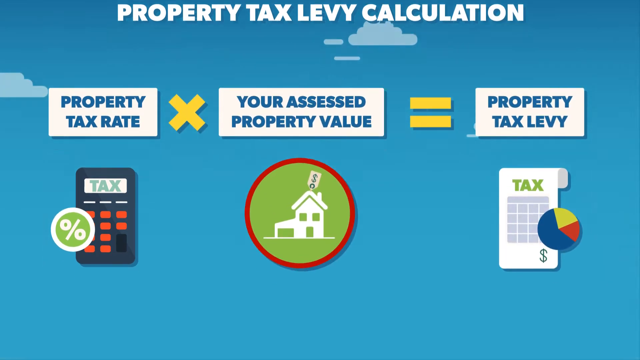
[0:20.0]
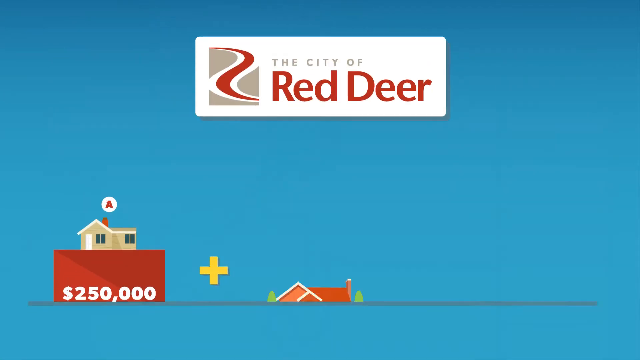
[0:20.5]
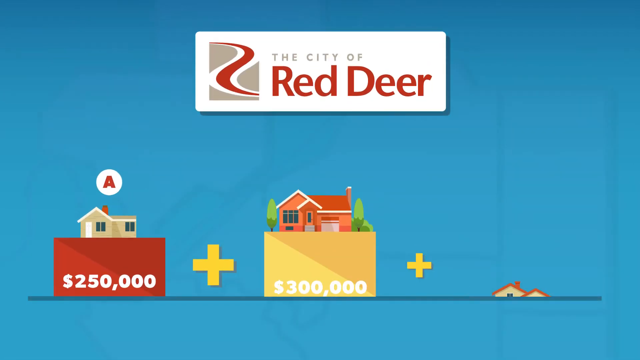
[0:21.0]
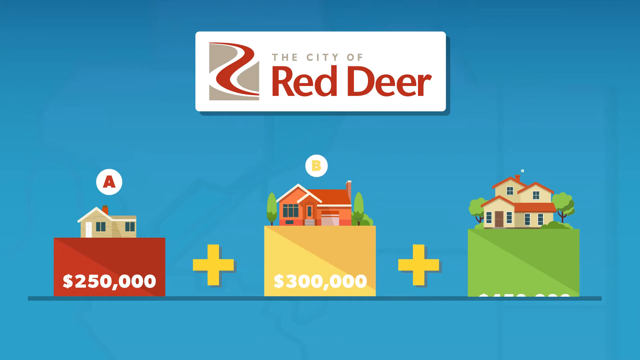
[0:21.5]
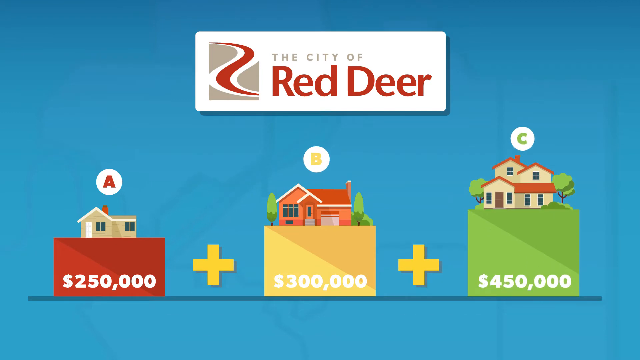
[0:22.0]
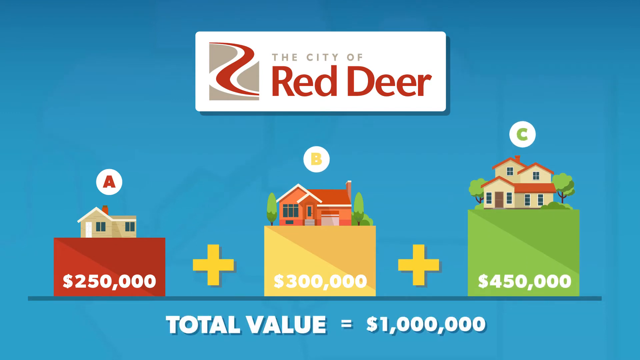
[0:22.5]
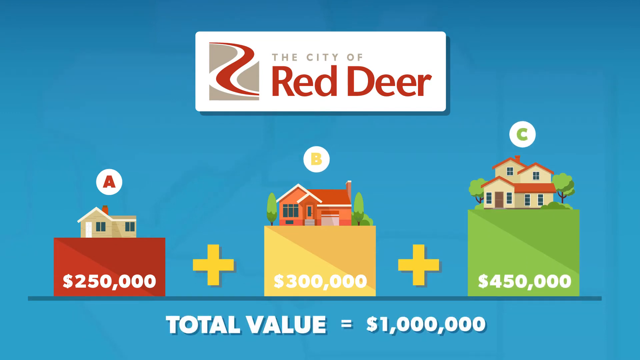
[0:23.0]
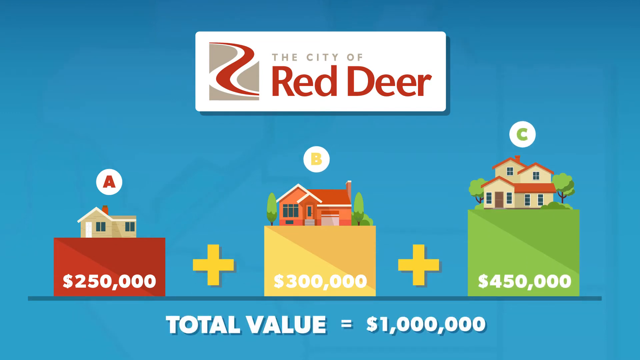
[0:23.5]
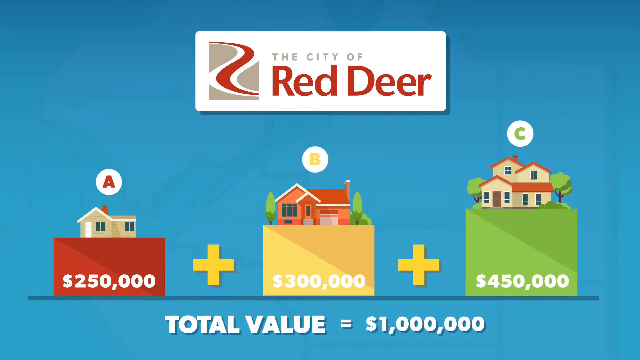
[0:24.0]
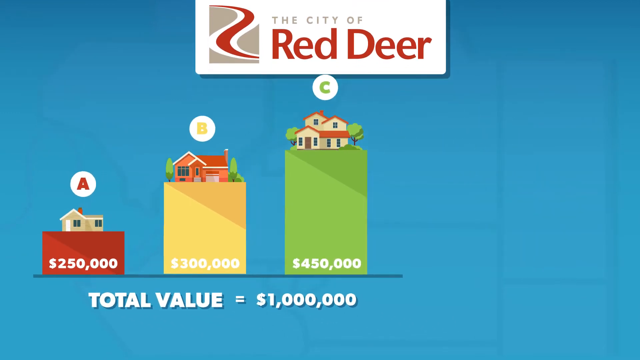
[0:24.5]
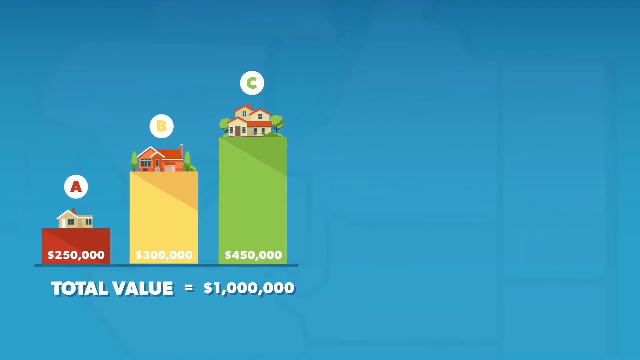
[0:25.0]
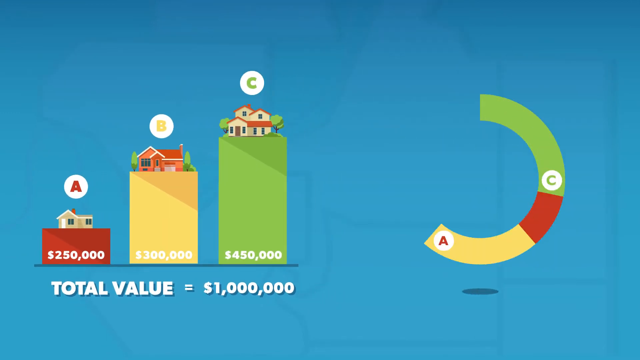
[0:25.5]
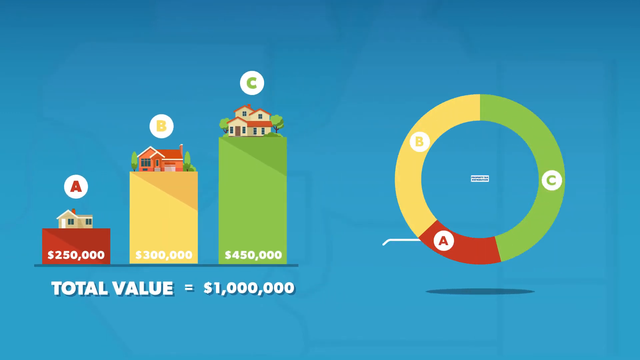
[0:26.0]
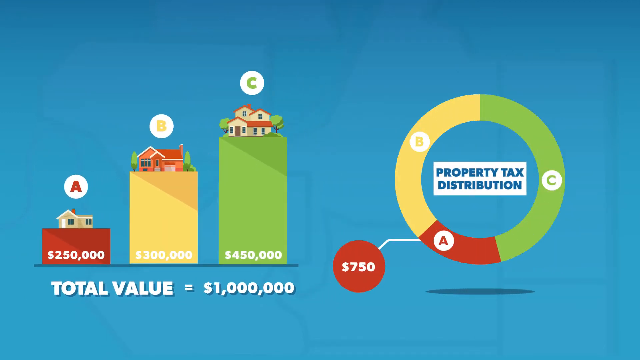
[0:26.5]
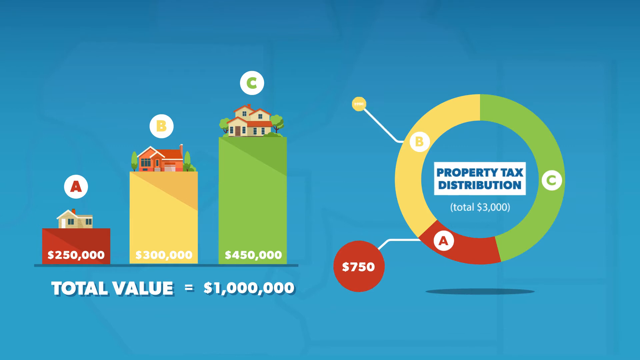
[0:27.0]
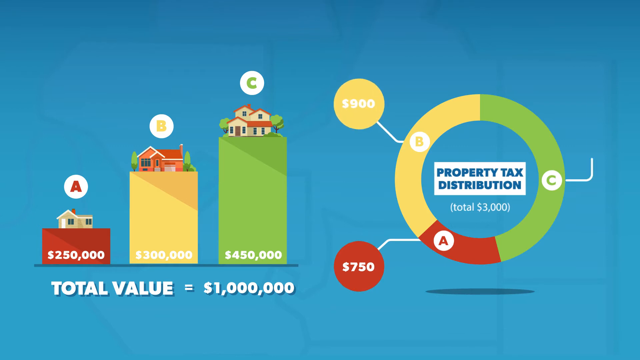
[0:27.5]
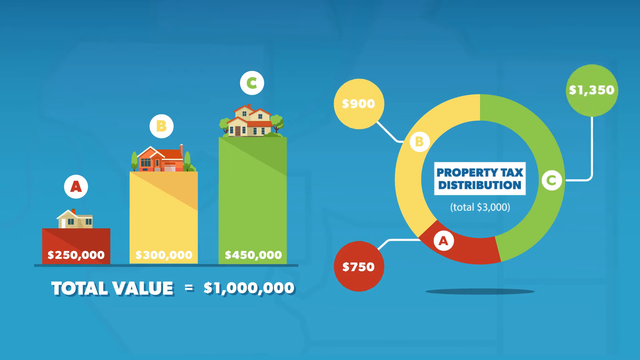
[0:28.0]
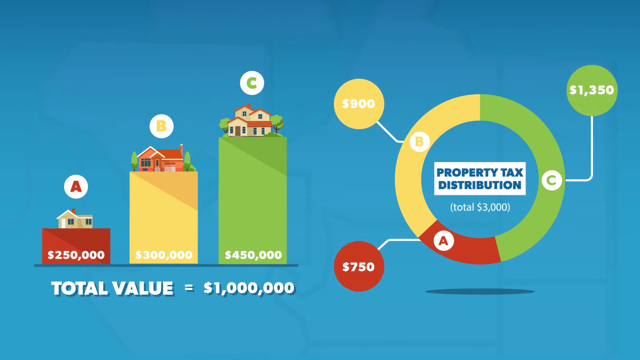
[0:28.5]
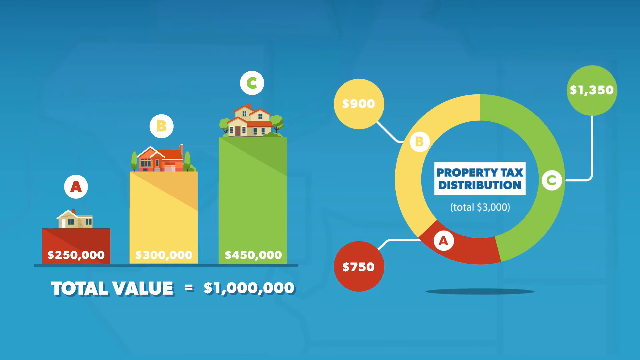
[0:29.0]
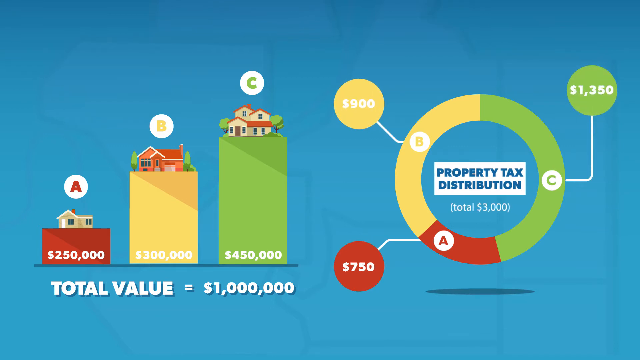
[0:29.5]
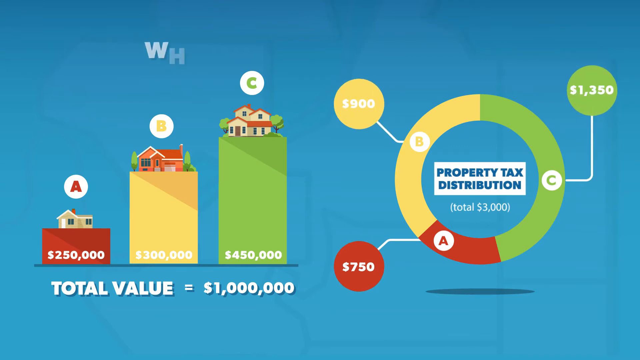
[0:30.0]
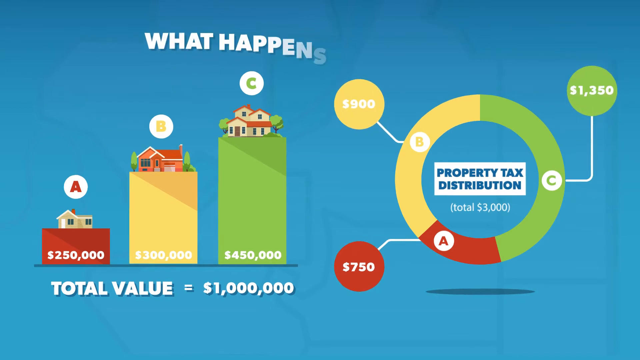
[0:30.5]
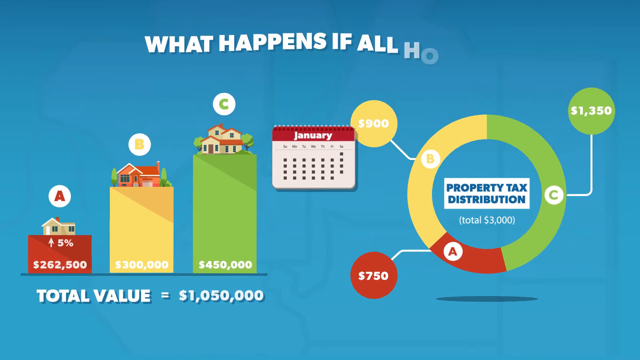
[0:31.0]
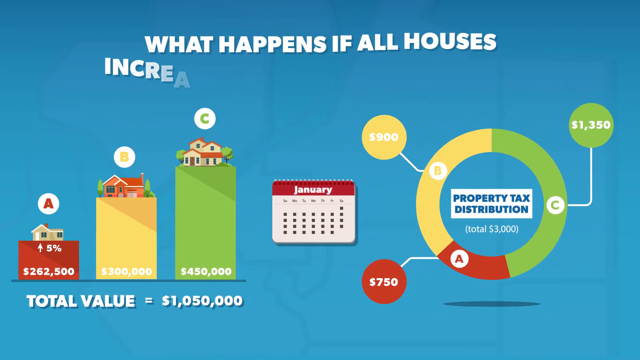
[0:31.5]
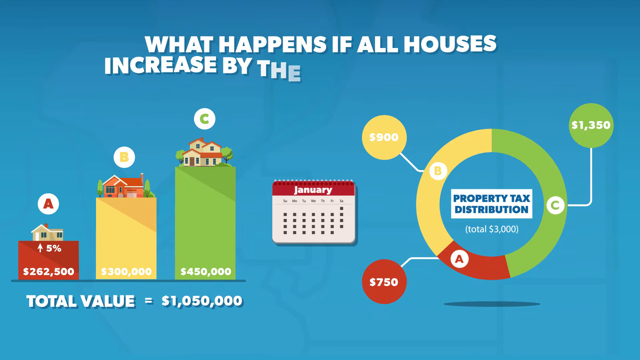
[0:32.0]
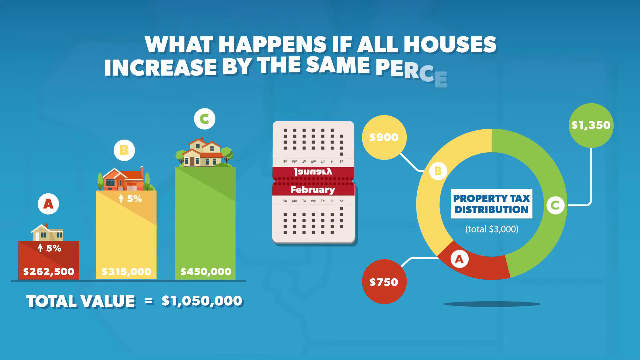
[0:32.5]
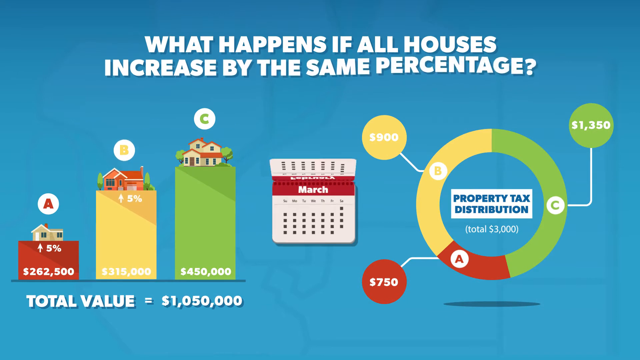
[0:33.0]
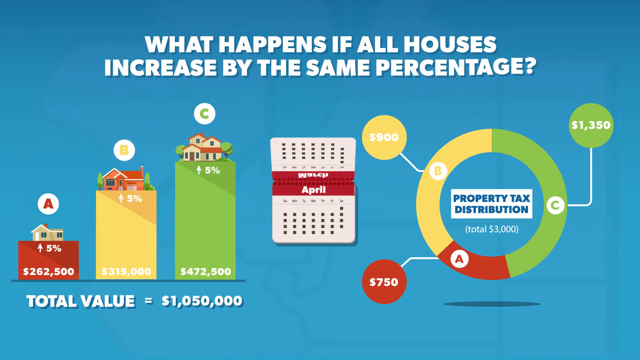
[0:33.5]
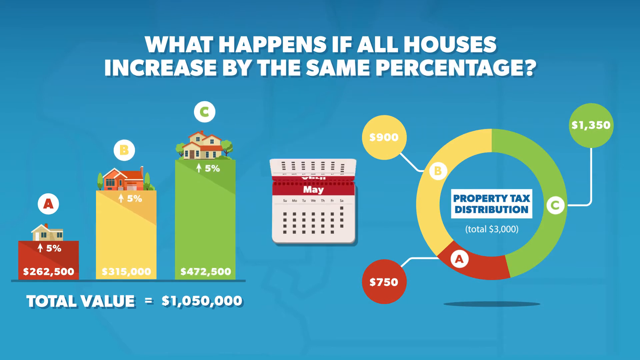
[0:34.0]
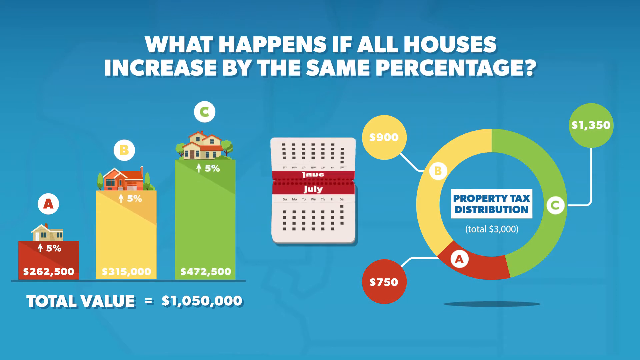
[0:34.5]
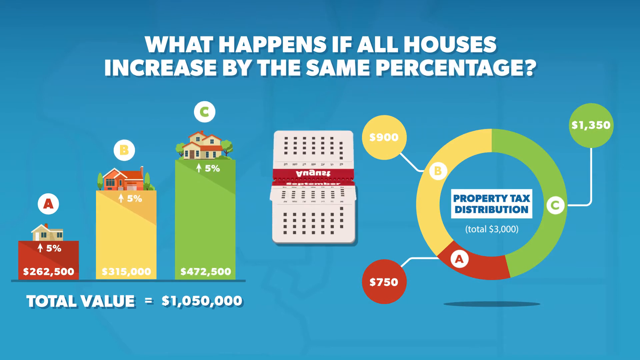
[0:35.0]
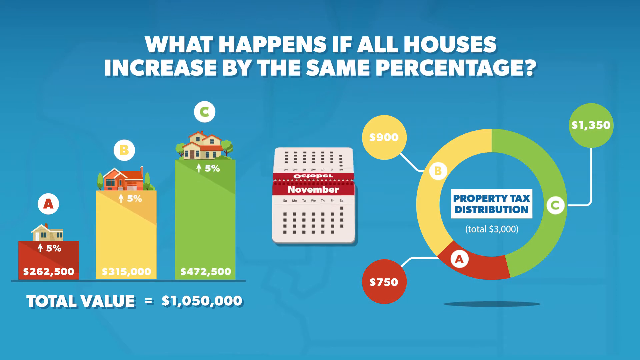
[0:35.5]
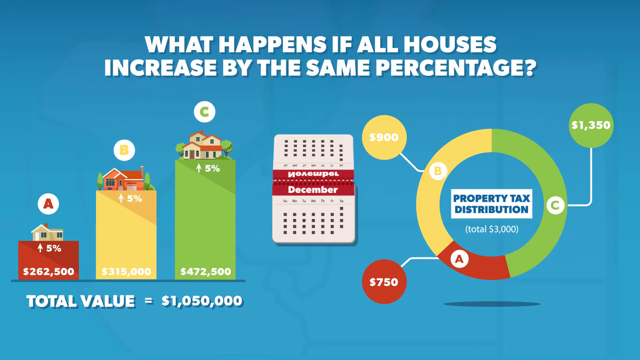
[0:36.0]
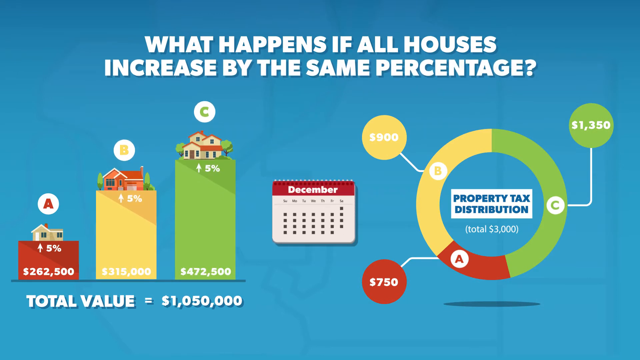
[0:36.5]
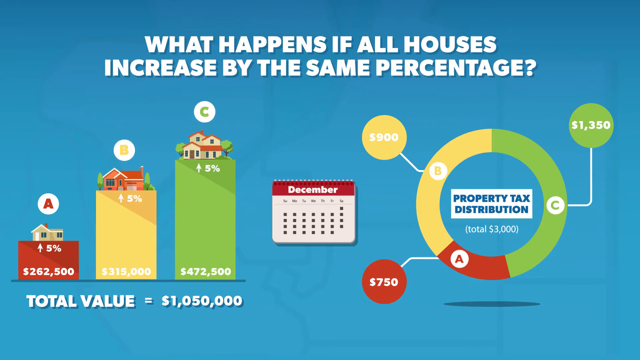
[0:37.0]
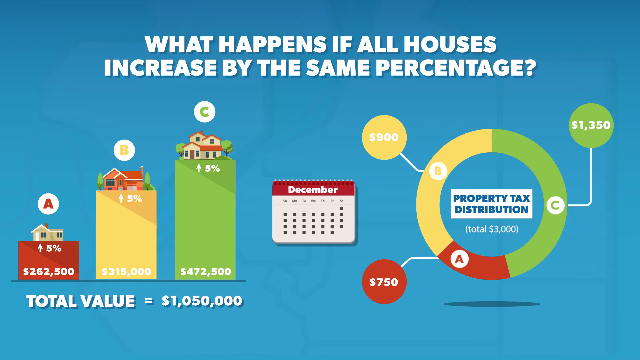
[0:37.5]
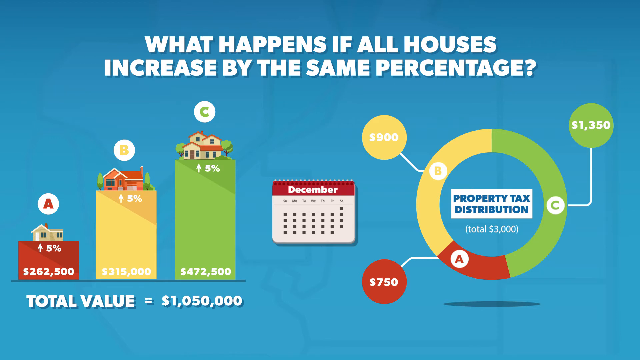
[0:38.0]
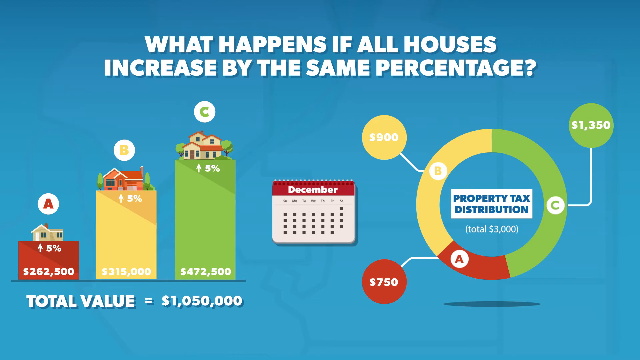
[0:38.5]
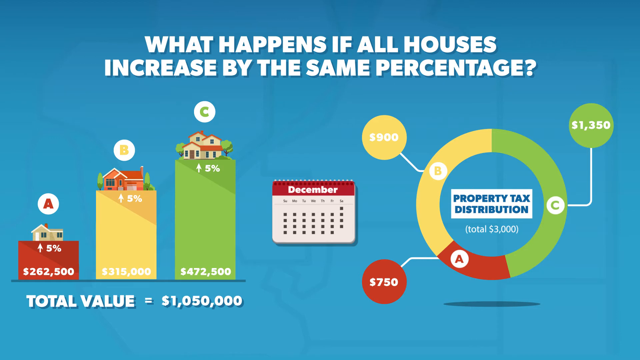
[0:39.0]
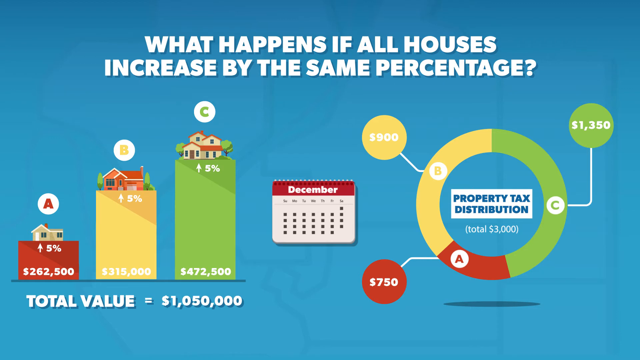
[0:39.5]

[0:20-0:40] The presentation, apparently from the city of Red Deer, continues with the city's logo. At the bottom are values labeled A, B and C: A with a figure of $250,000, B with $300,000 and C with $450,000, for a total value of $1,000,000 USD. Next is what appears to be a bar chart showing the property tax distribution, with a yellow section, a green section and a red section: A is on the red section, B on the yellow section and C on the green section. Arrows come out of the sections: the one from A has a figure of $750, the one from the yellow section $900, and the other, a blue one for C, $1,250,000.